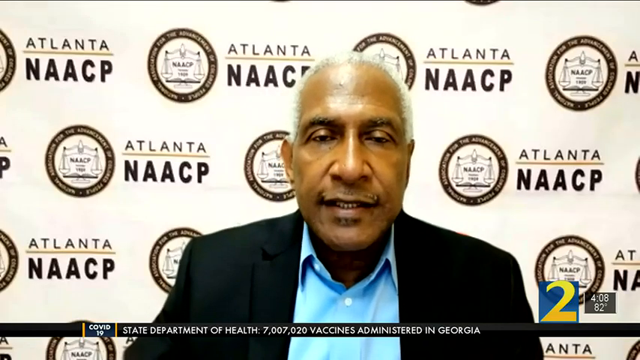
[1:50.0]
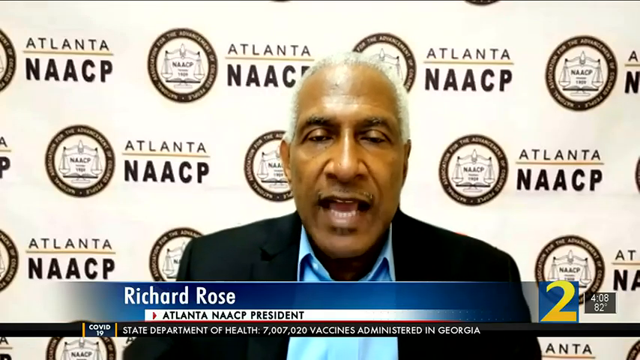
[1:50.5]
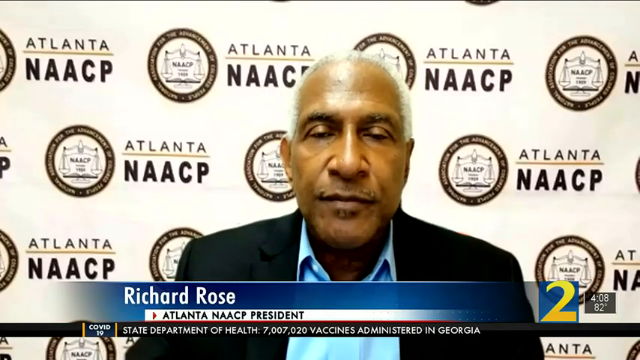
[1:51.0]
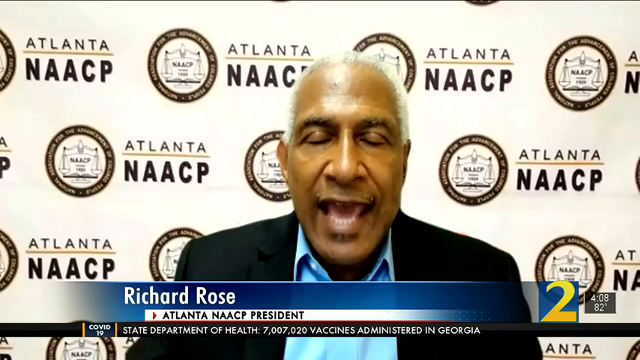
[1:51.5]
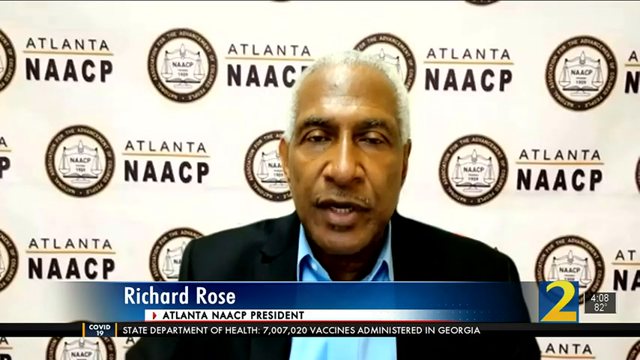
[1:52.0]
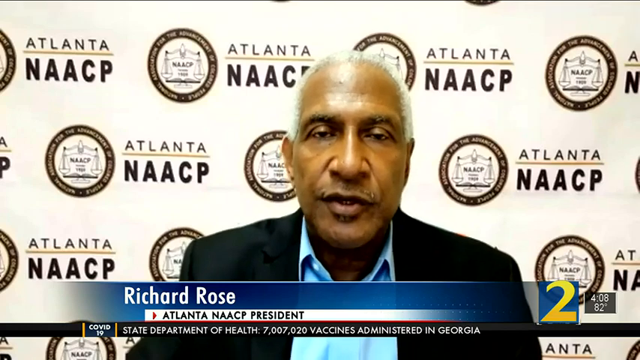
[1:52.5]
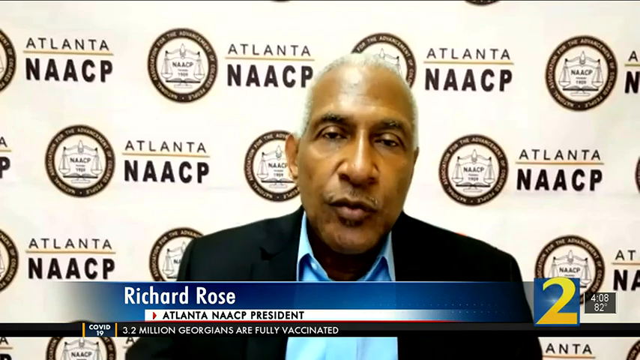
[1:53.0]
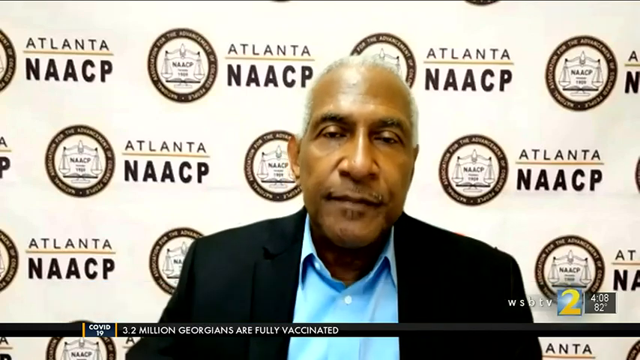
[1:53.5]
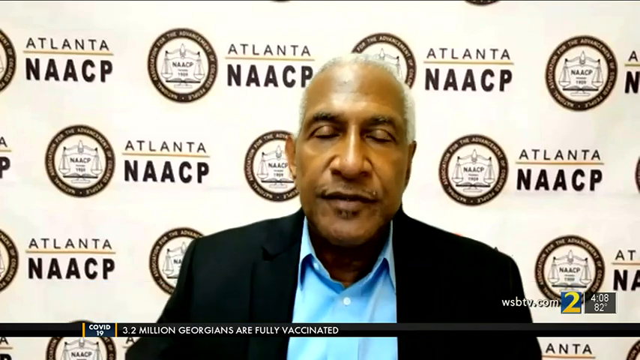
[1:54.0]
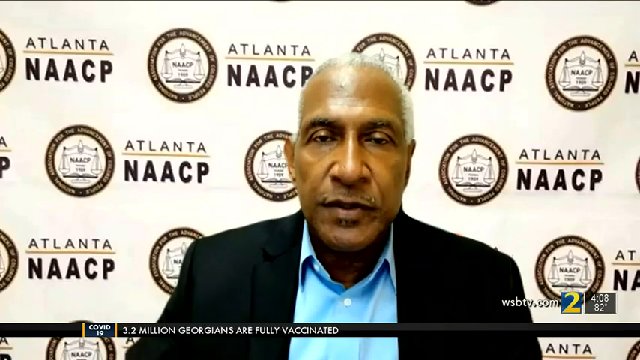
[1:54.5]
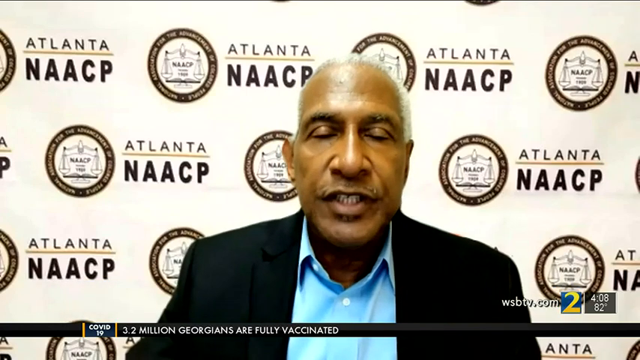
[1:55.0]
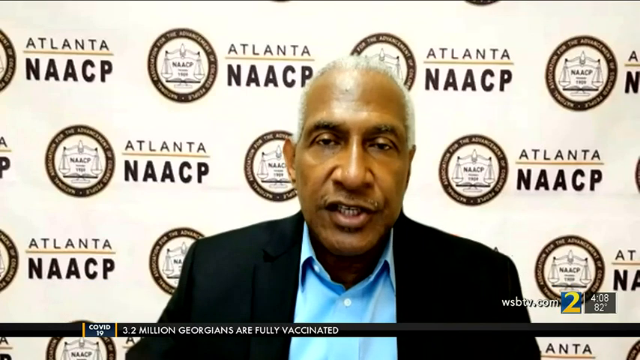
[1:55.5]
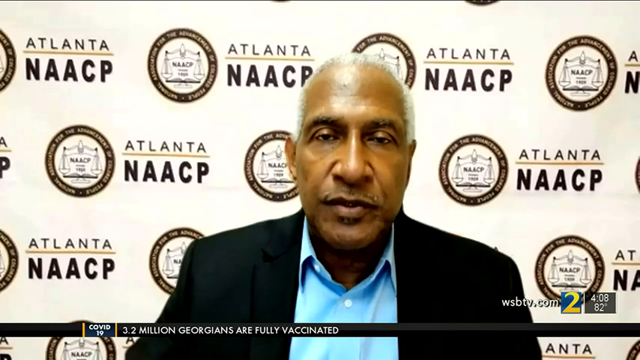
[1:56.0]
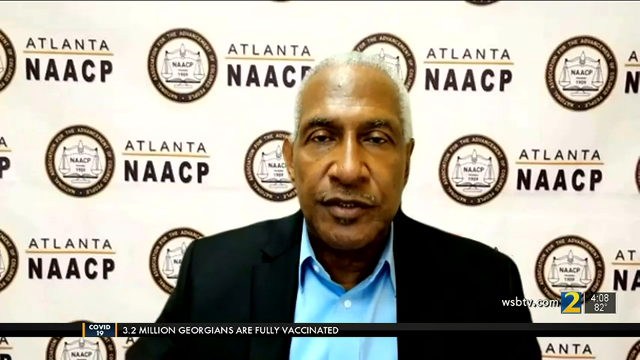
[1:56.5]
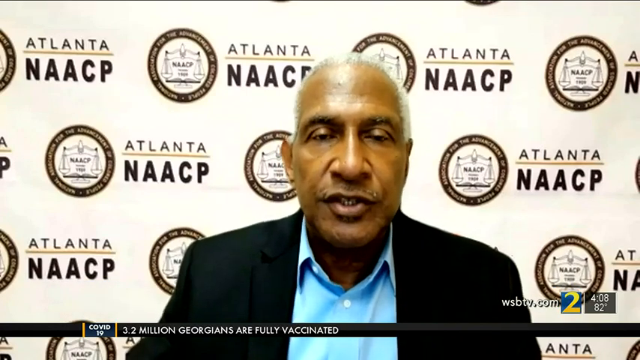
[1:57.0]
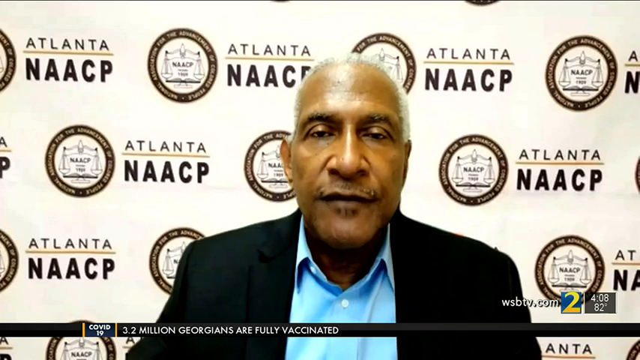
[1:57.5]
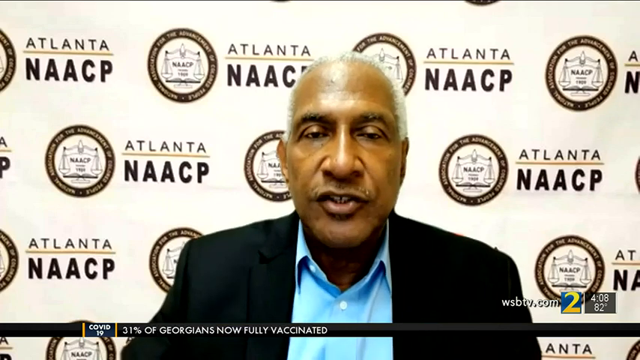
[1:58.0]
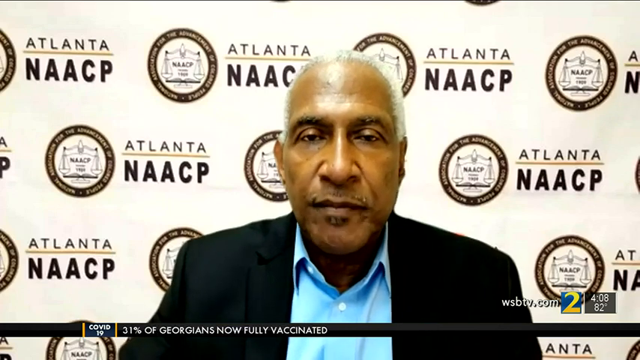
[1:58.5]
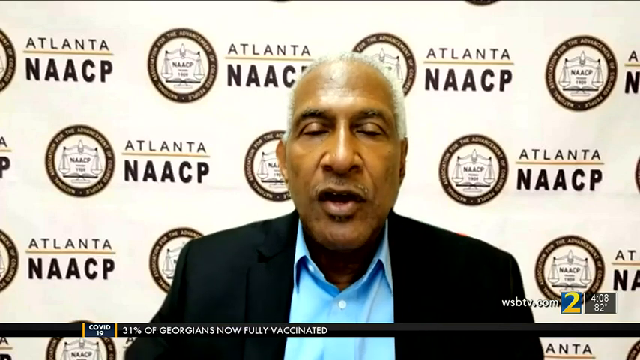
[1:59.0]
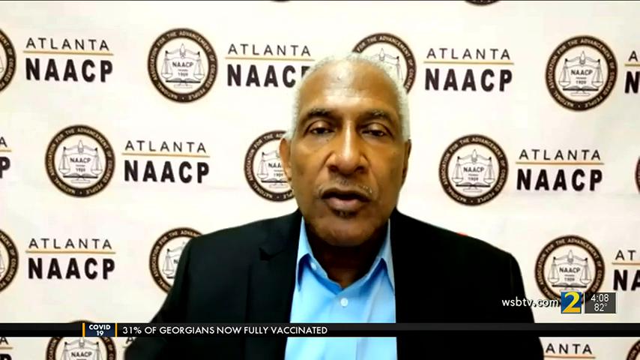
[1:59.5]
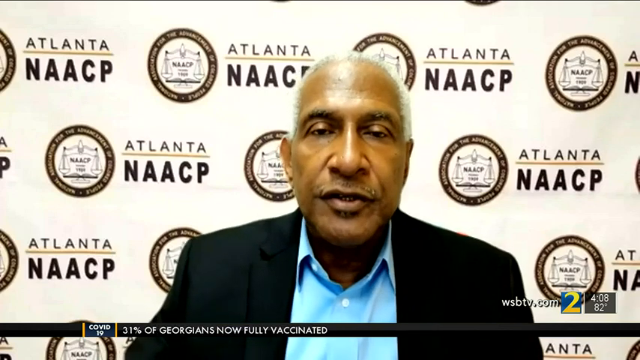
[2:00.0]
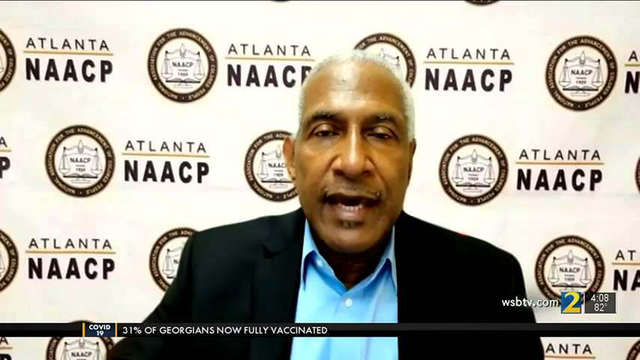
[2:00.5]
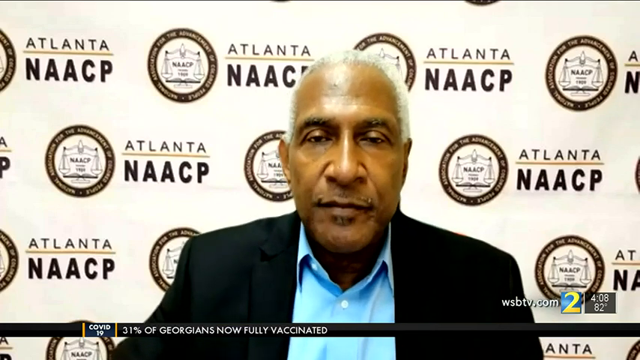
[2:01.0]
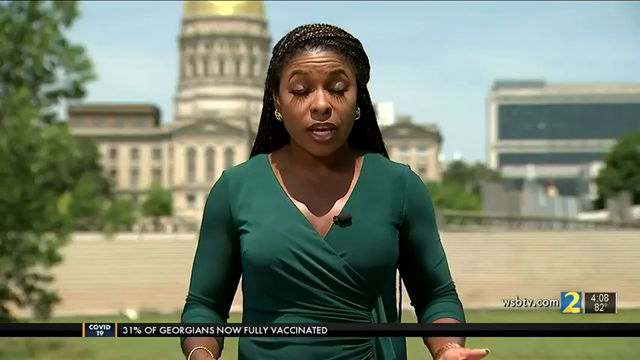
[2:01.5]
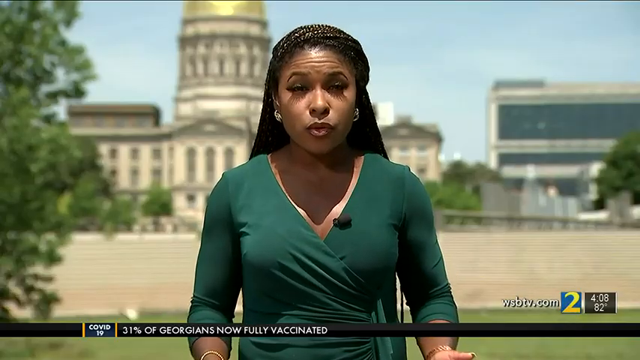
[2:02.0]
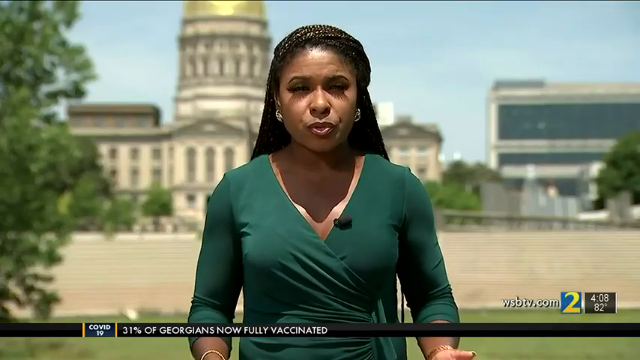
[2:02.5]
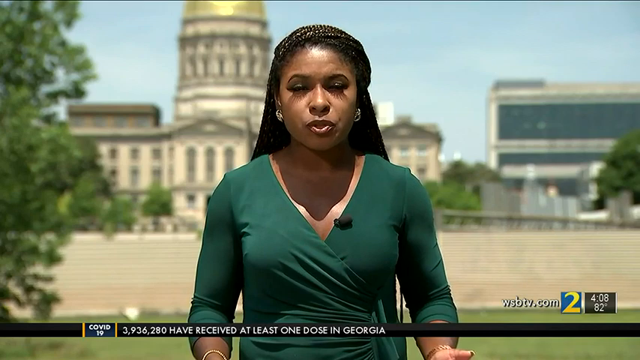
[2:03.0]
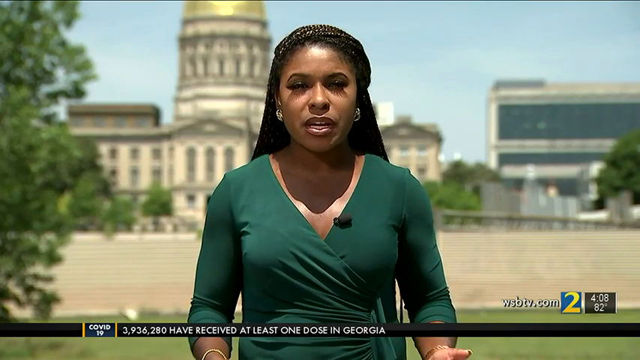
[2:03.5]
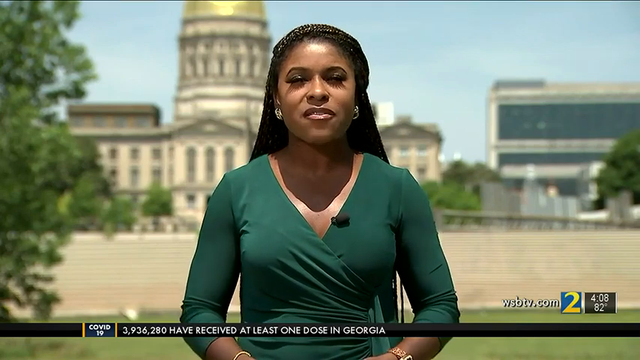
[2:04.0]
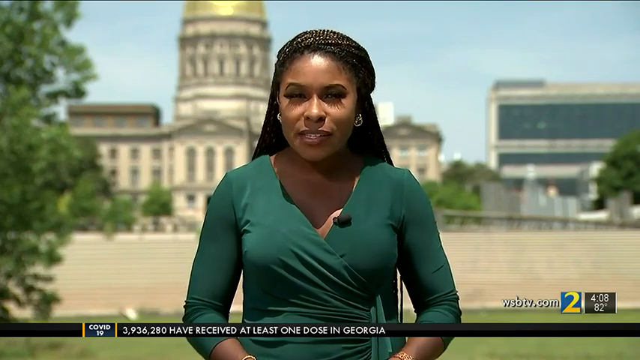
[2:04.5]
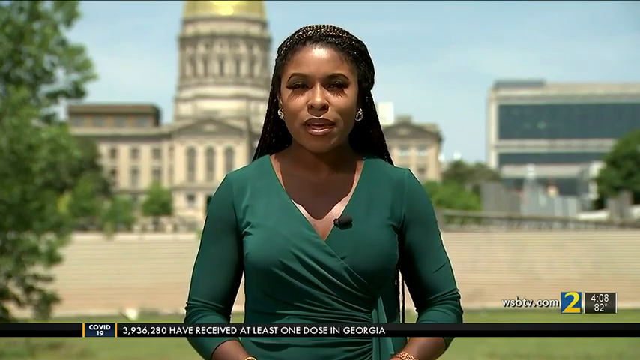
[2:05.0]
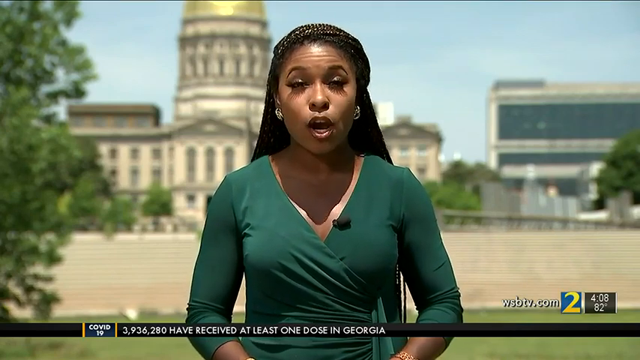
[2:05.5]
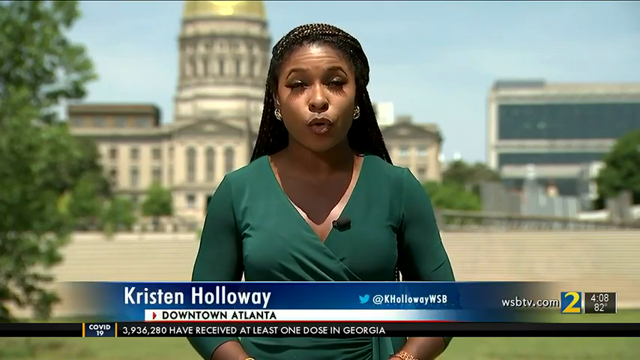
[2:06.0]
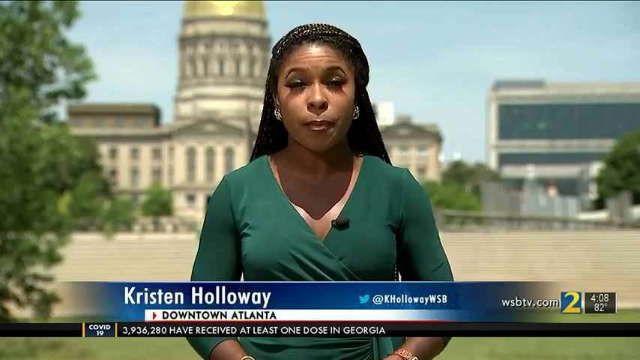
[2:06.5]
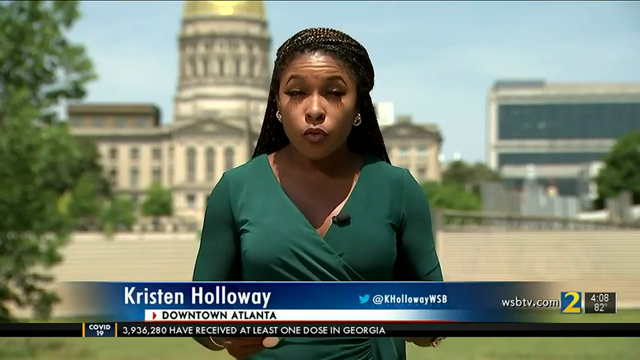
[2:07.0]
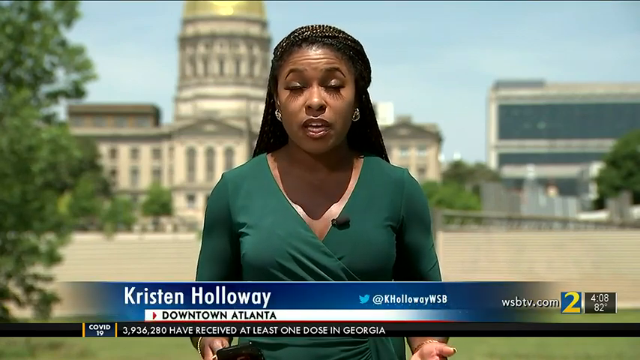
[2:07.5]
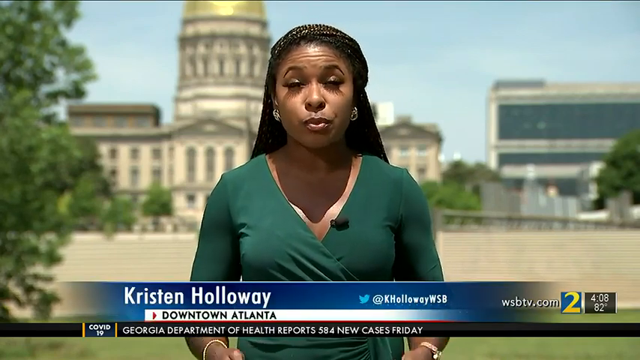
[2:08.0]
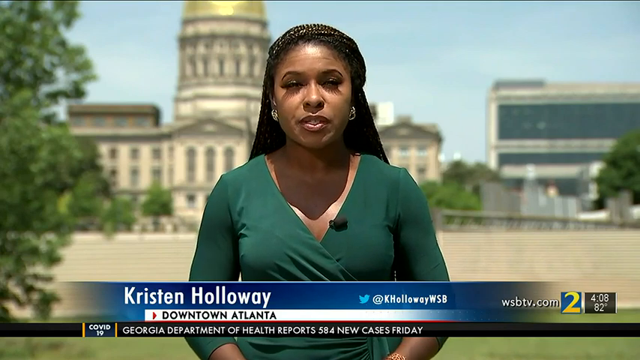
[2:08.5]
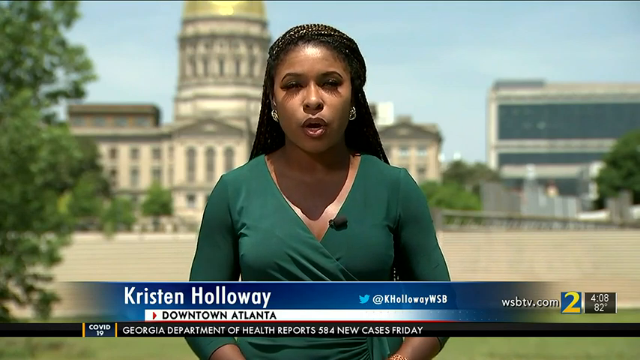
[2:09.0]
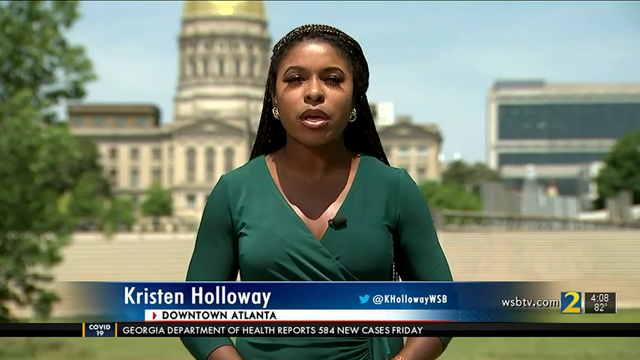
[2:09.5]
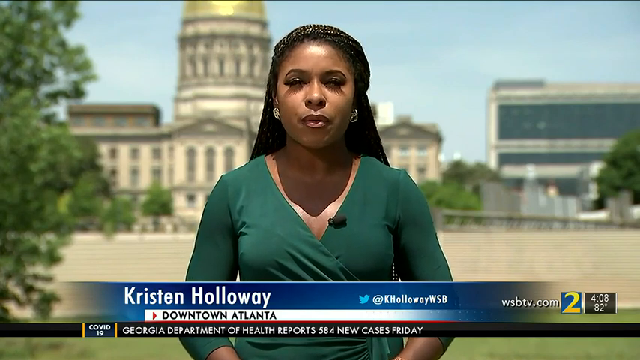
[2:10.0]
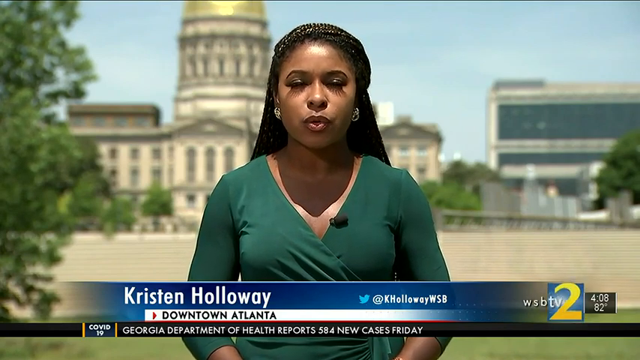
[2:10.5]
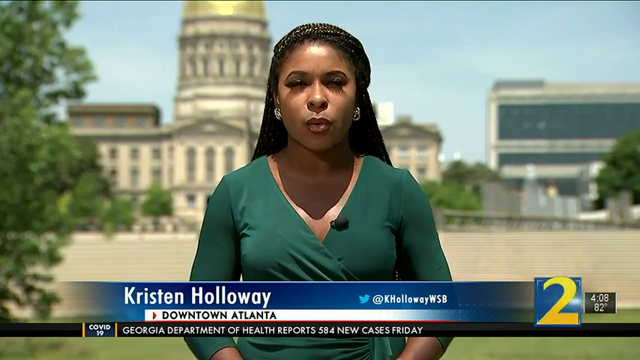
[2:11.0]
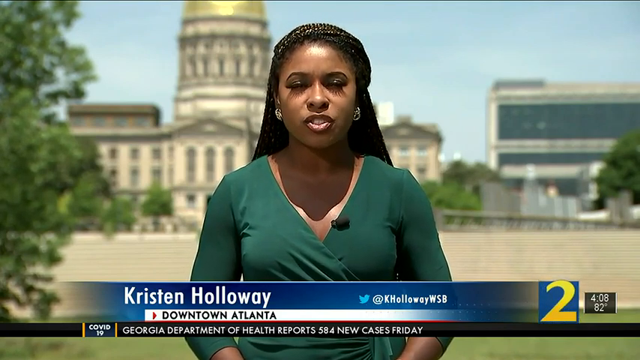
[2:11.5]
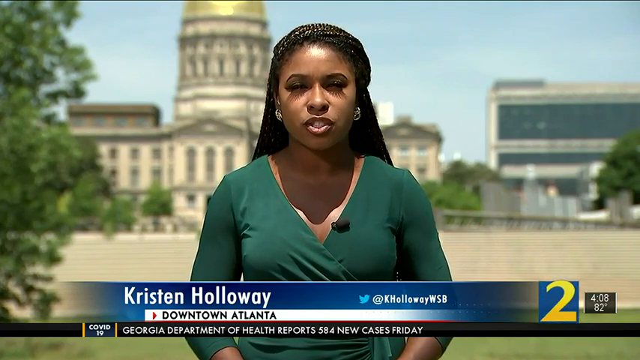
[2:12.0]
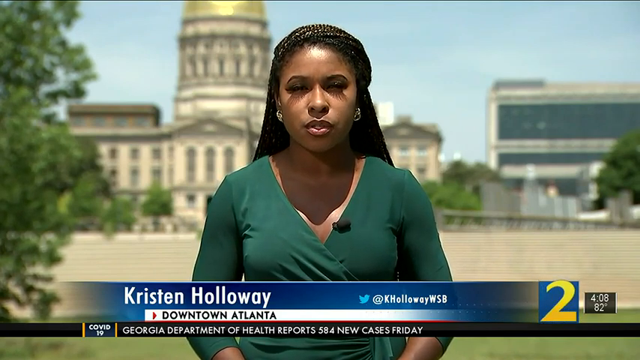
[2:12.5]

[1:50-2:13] Richard Rose, the Atlanta NAACP president, appears to be interviewed in front of a backdrop that reads "Atlanta NAACP" and has an emblem on it. He wears a black blazer over a light blue polo. He talks to the screen, apparently giving his feedback on the Georgia Board of Education, critical race theory in schools and the governor's rejection of it. The scene then changes to a news reporter in a green shirt standing in front of downtown Atlanta, possibly city hall. Her name, Kristen Holloway, pops up at the bottom, and she talks directly to the camera.